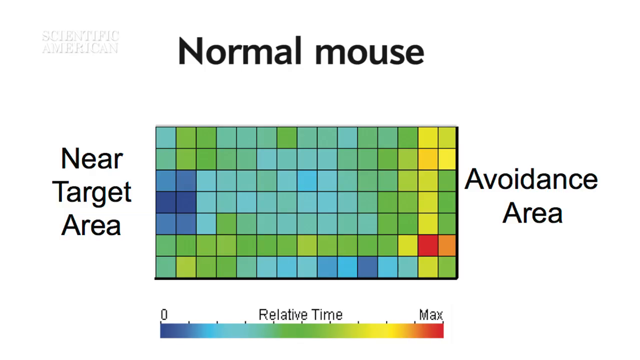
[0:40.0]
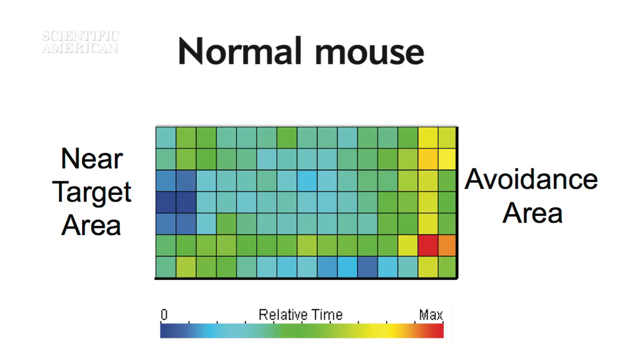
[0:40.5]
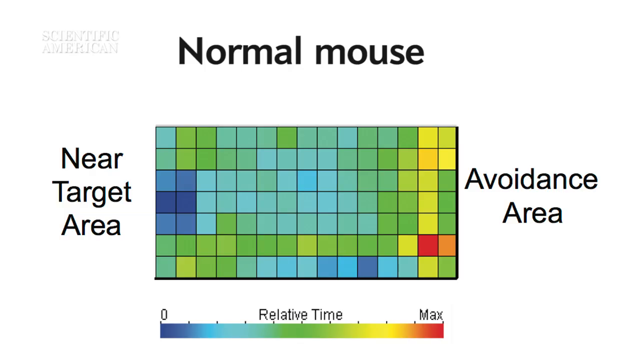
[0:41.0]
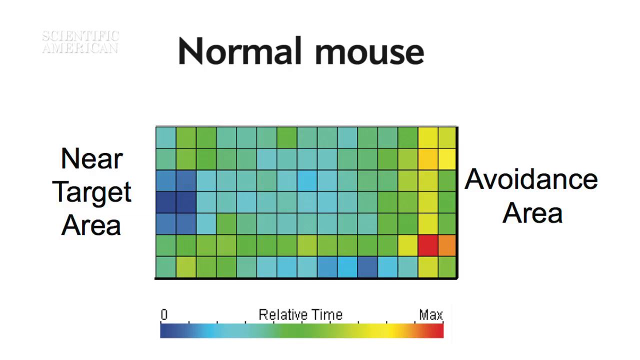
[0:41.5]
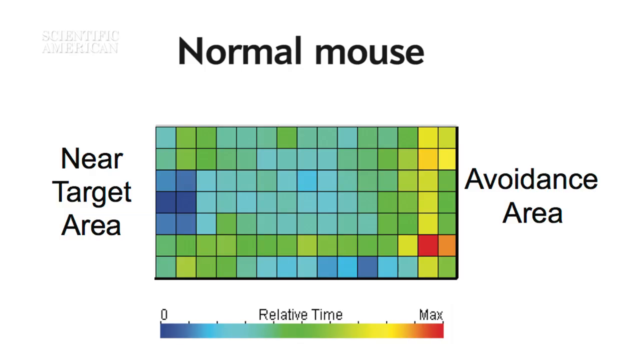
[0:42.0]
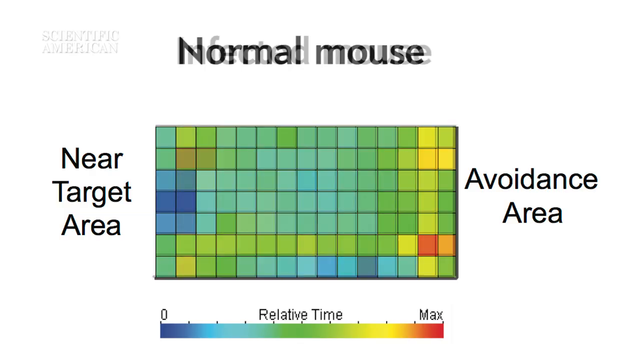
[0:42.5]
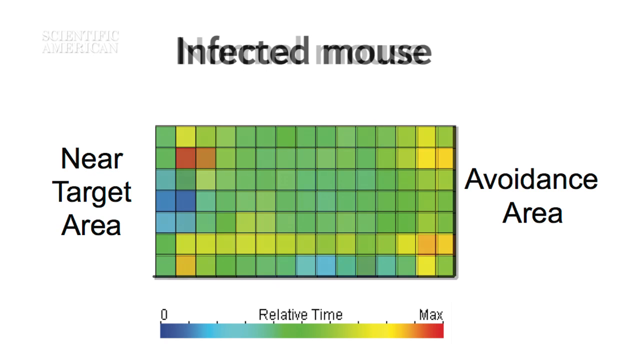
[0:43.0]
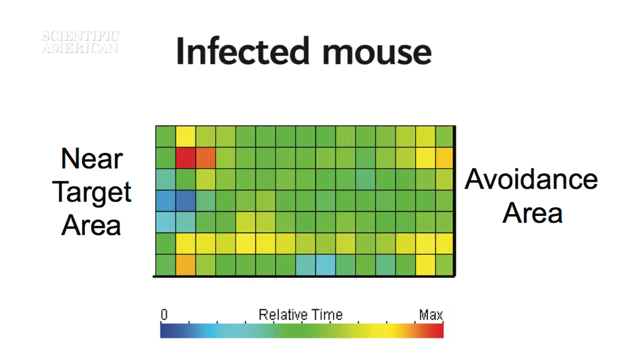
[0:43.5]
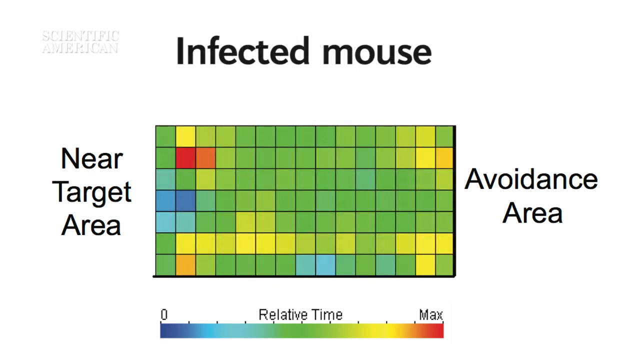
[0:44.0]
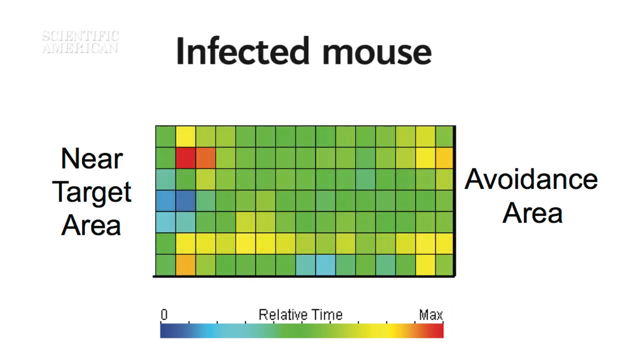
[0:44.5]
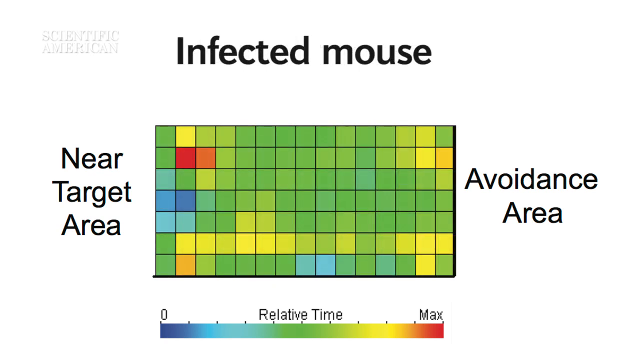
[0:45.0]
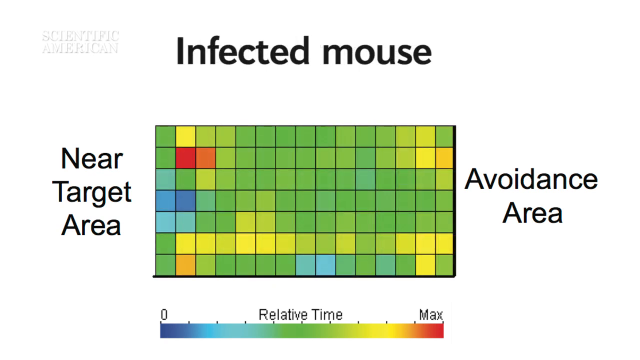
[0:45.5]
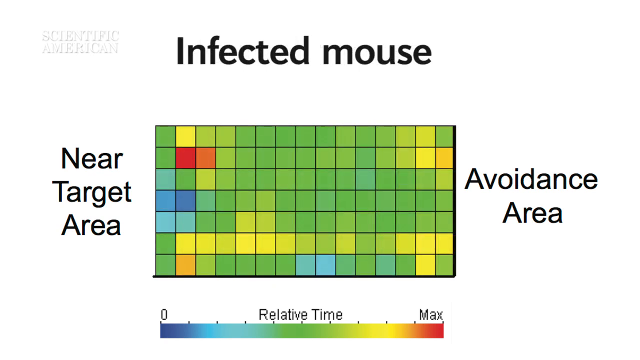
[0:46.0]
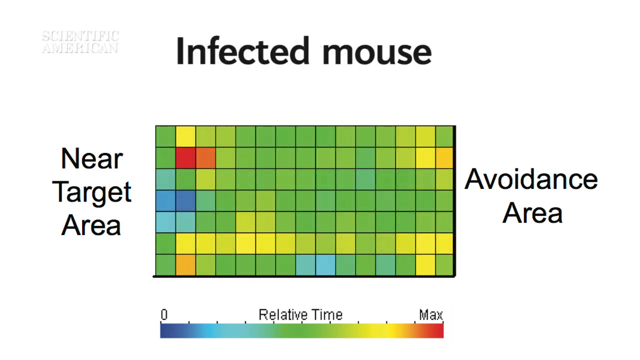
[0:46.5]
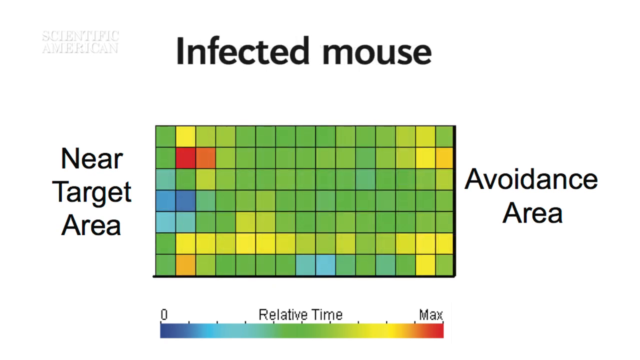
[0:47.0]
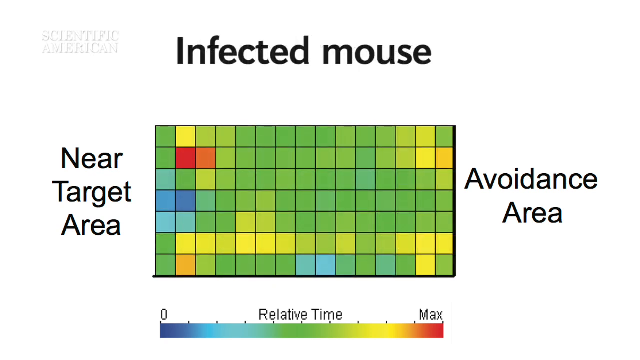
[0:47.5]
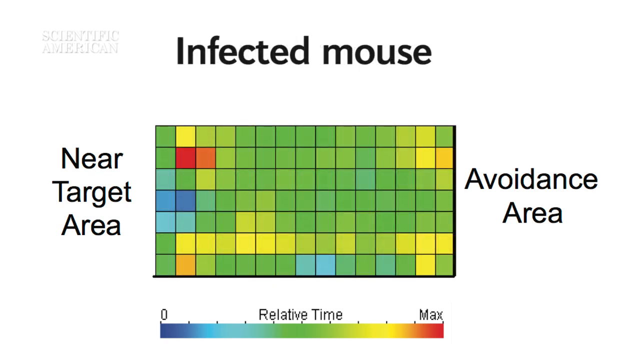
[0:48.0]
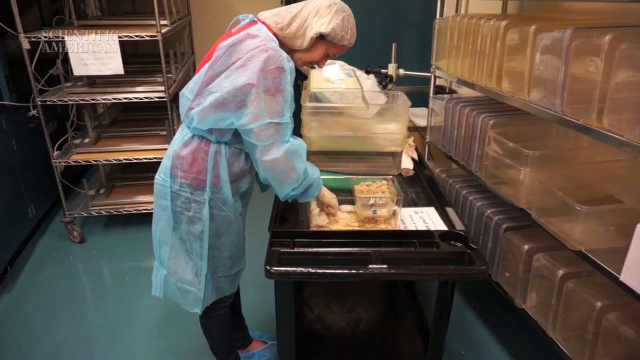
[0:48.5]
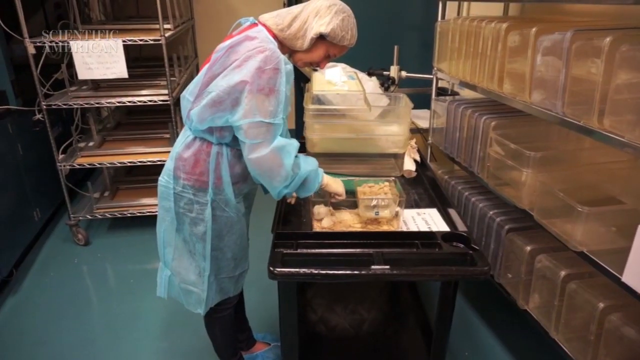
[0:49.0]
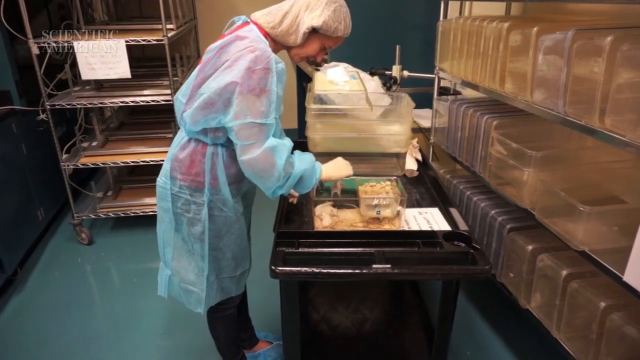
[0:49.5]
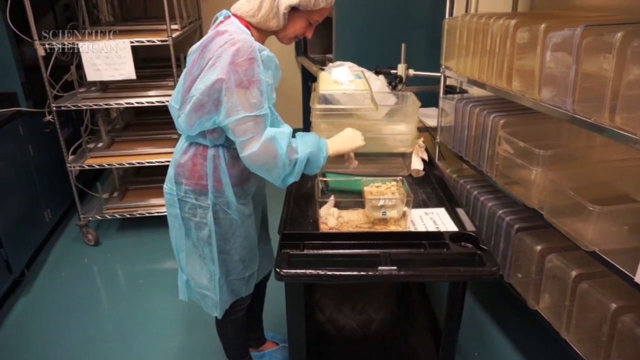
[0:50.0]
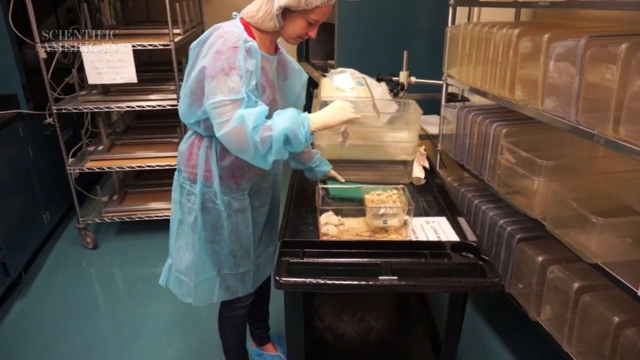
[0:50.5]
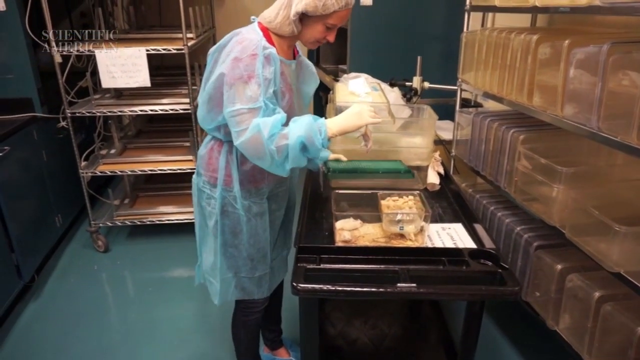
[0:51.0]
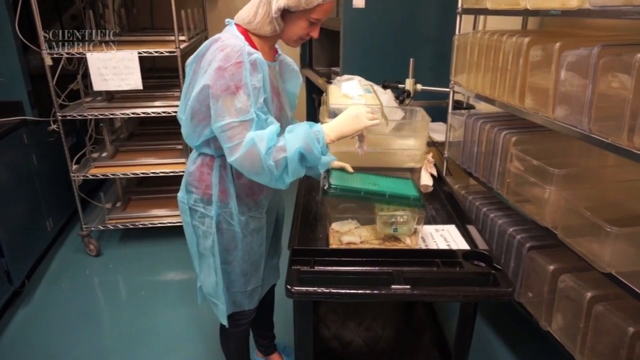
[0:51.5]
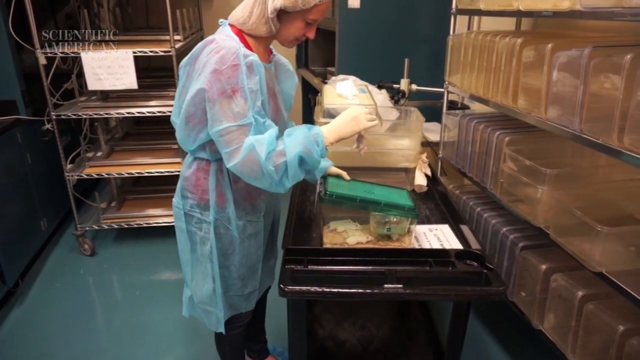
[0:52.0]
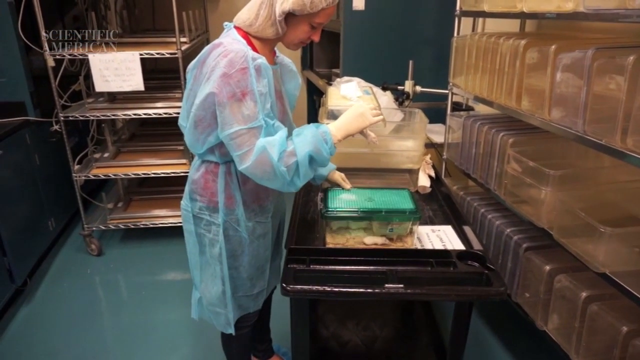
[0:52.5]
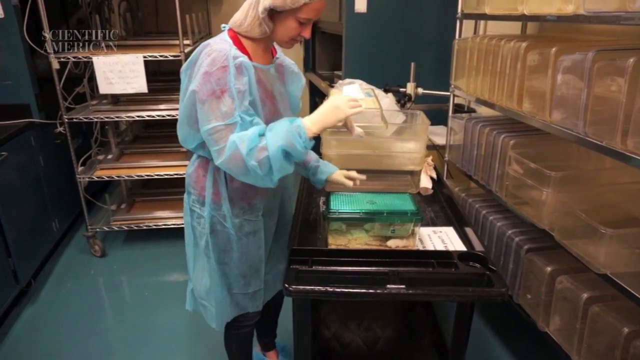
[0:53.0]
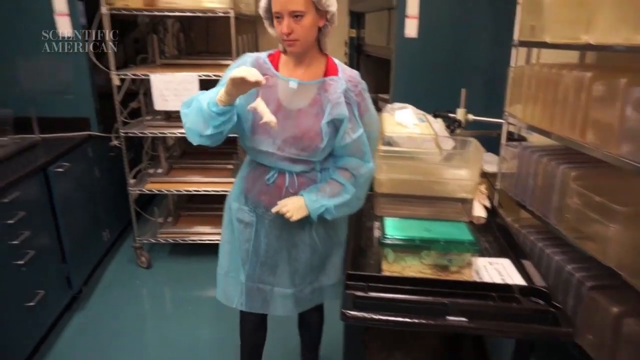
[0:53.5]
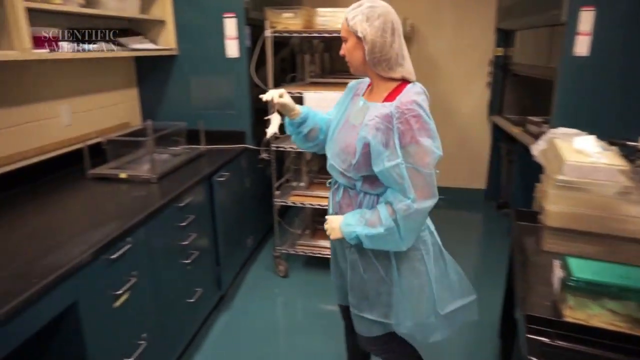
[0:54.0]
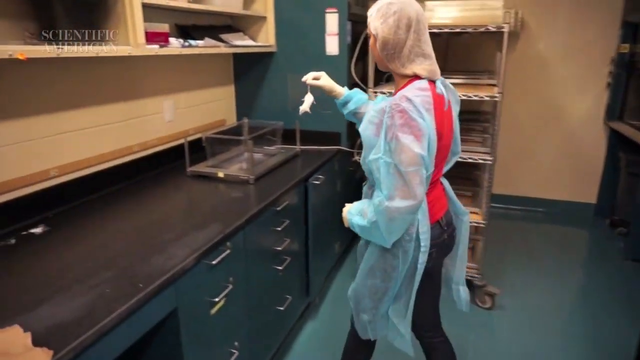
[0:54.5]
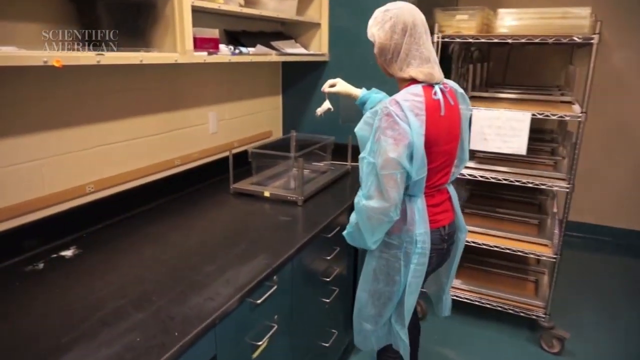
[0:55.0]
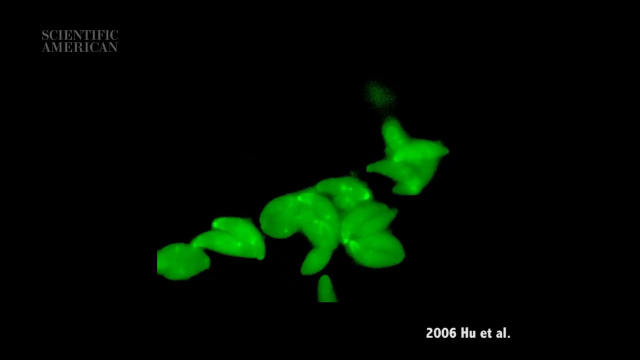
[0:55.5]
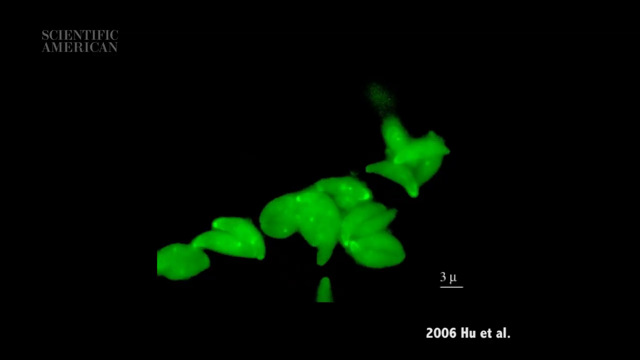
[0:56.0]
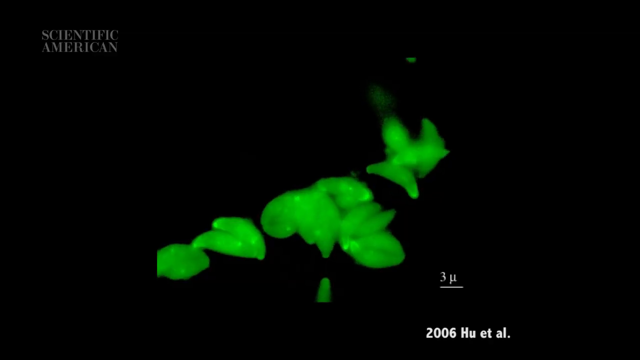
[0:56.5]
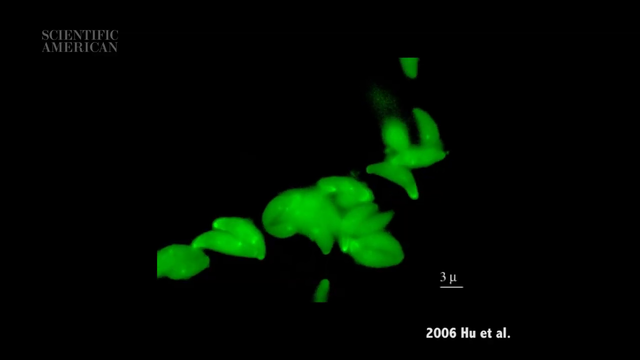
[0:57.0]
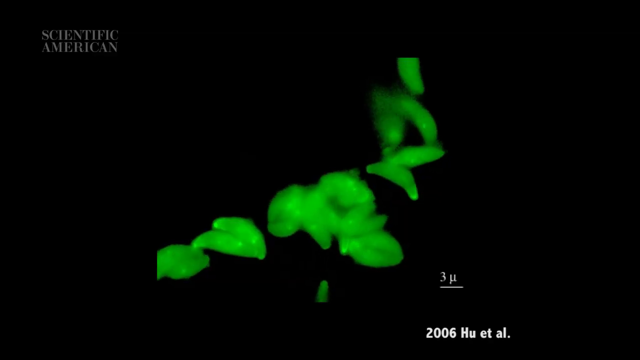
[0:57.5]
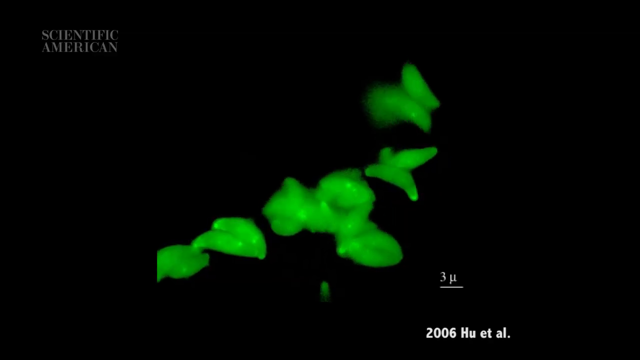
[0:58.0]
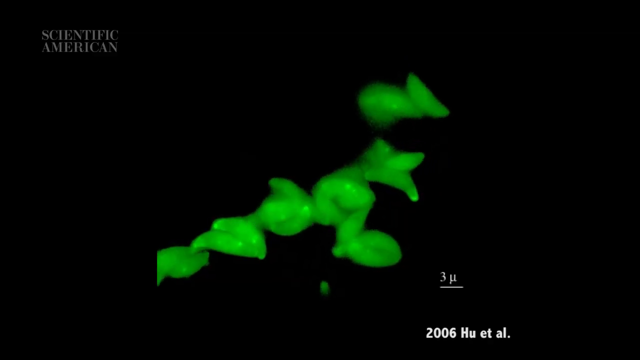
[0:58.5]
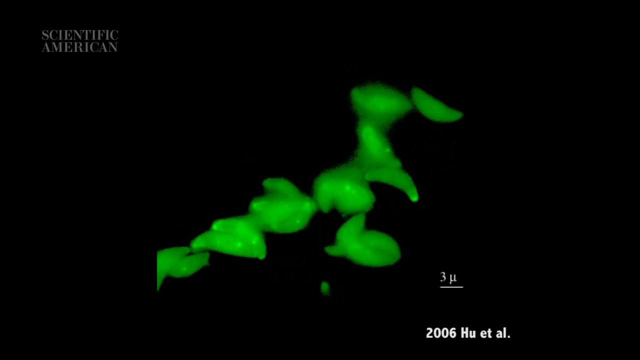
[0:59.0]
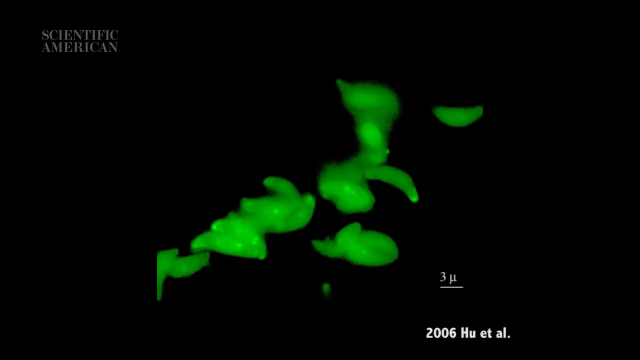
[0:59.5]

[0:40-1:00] A chessboard-style grid of many different coloured squares is shown, with "near target area" on the left-hand side and "avoidance area" on the right-hand side, along with titles. As the video progresses, the squares on the grid change colour, sort of transitioning from mostly blue to mostly green and then brighter green. A lady wearing protective clothing then grabs another mouse from a container and moves it into a plastic container on the other side of a workbench. She wears a blue cape, a protective cap and protective gloves. What appears to be a zoomed view of a green cell is also shown.